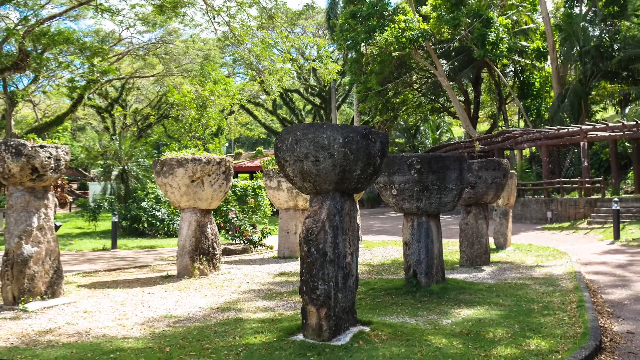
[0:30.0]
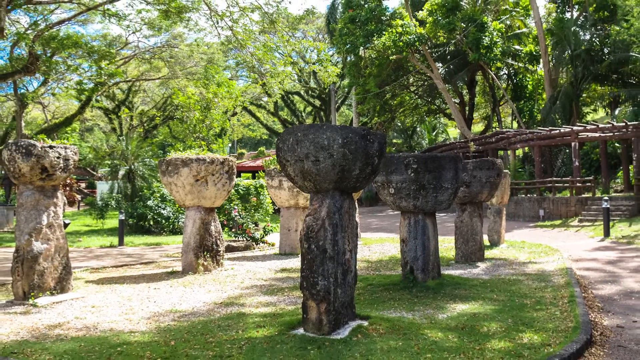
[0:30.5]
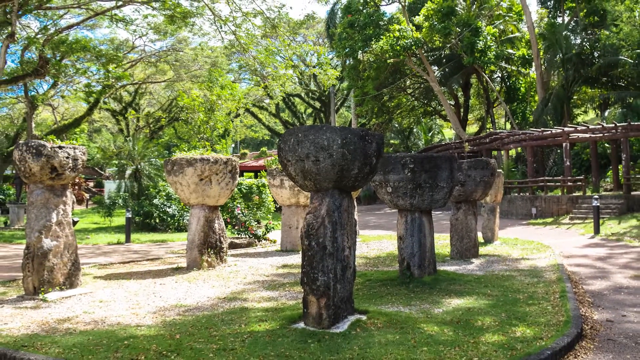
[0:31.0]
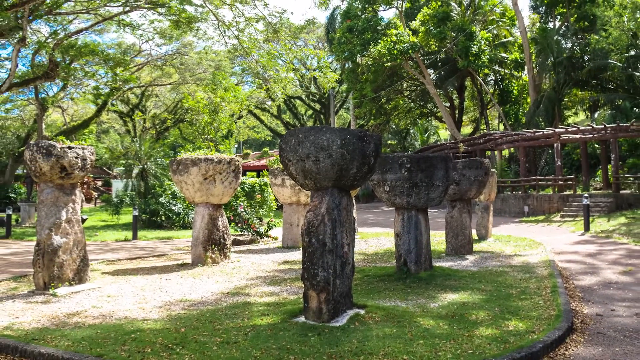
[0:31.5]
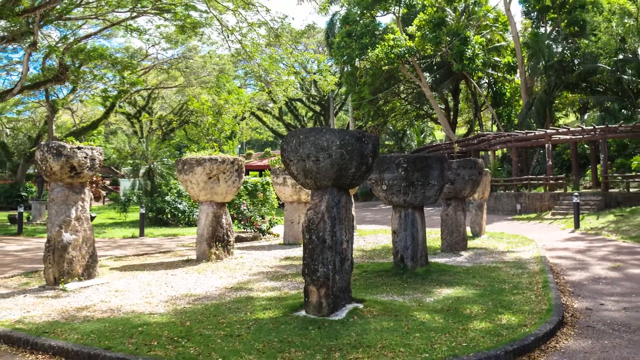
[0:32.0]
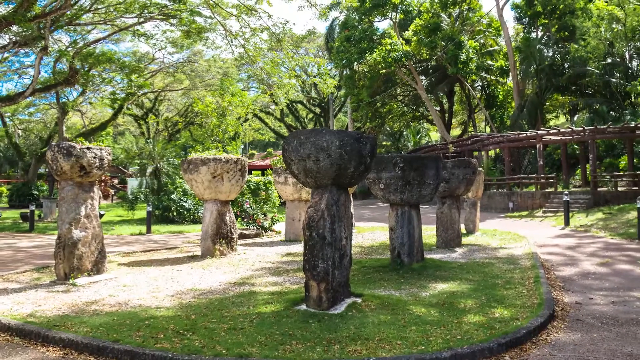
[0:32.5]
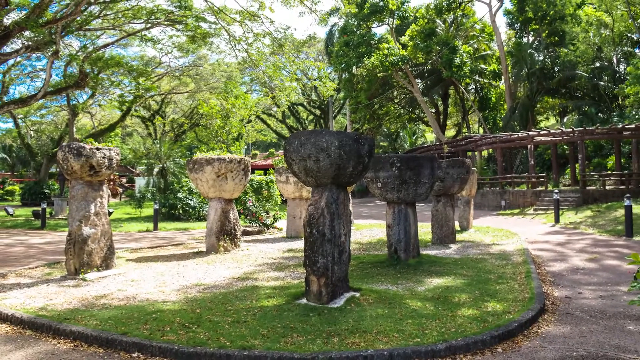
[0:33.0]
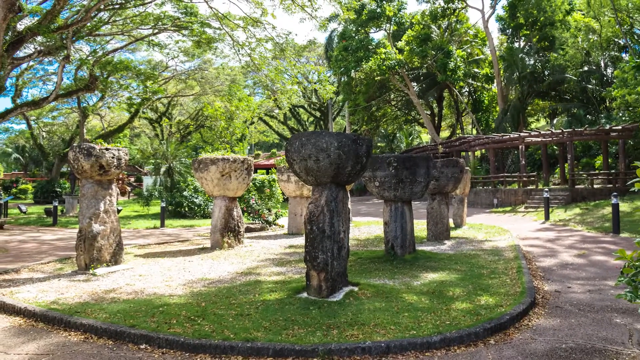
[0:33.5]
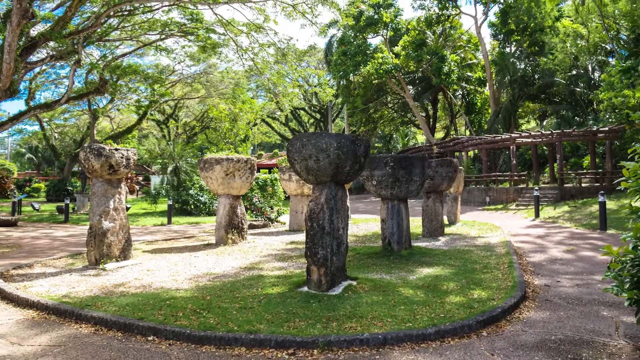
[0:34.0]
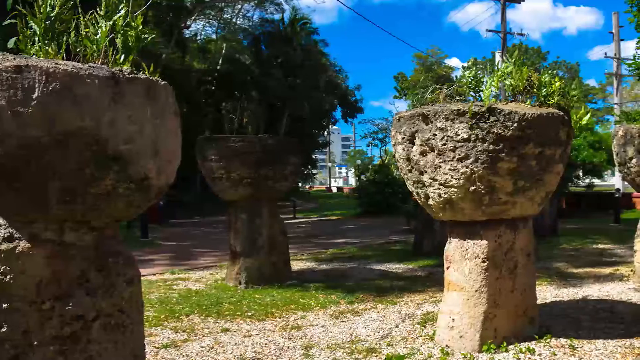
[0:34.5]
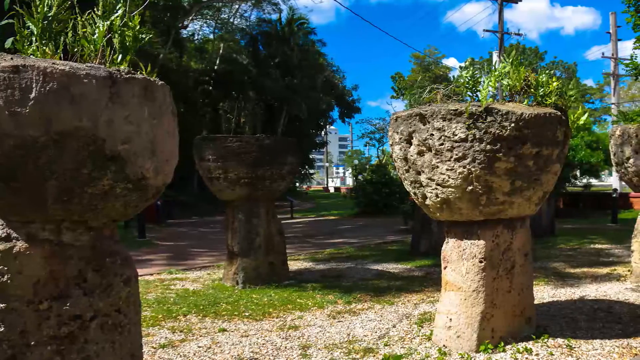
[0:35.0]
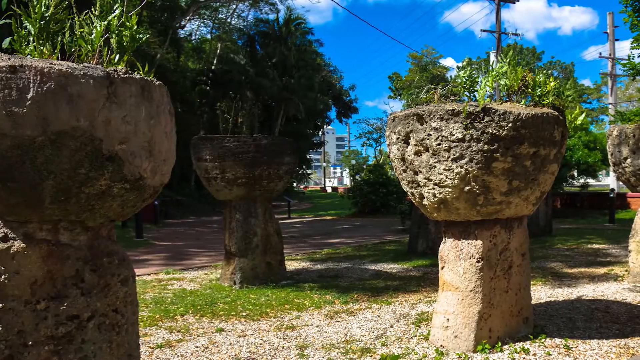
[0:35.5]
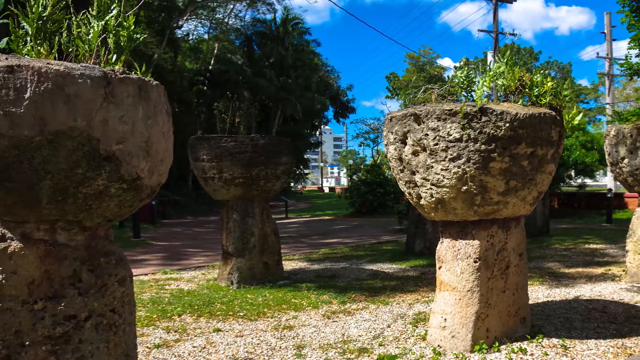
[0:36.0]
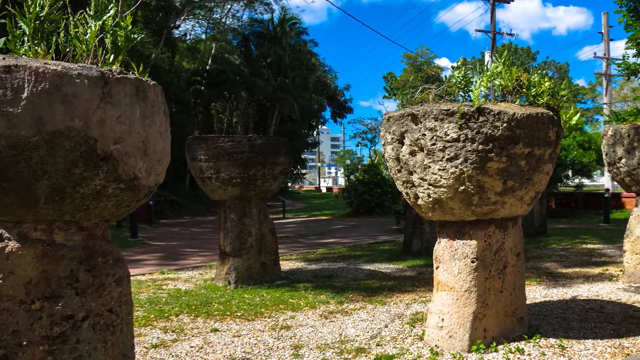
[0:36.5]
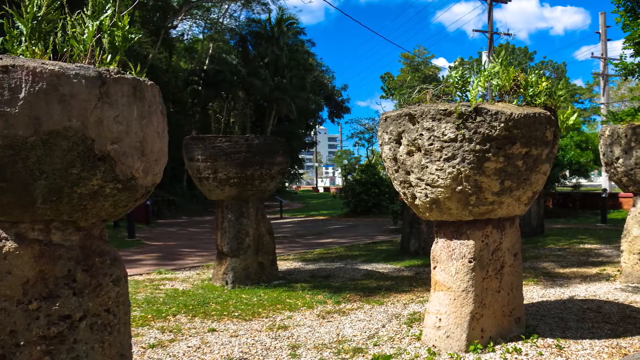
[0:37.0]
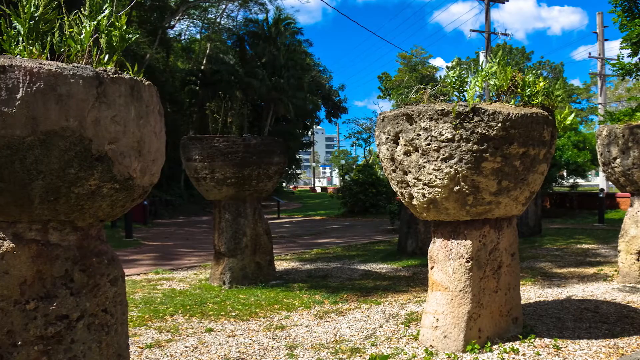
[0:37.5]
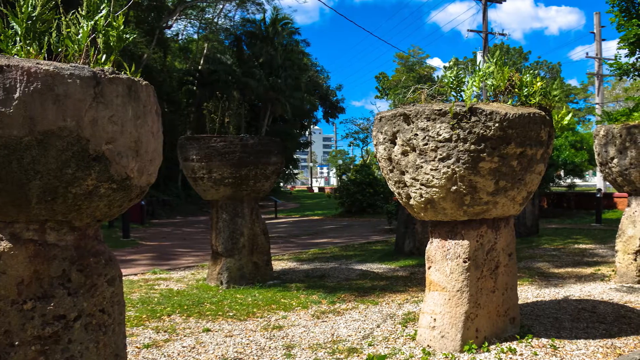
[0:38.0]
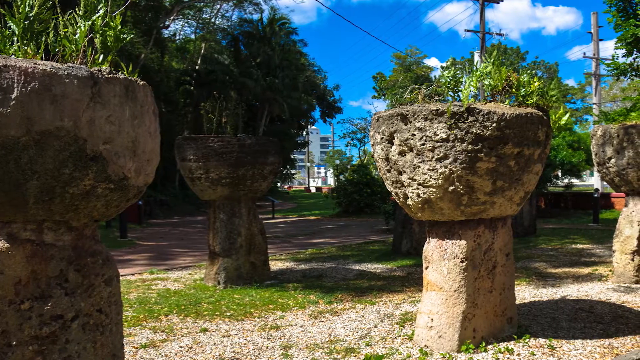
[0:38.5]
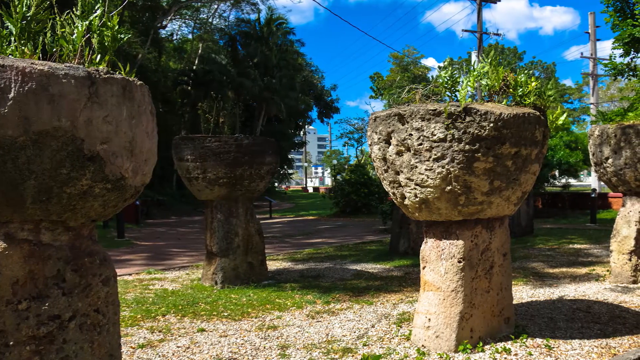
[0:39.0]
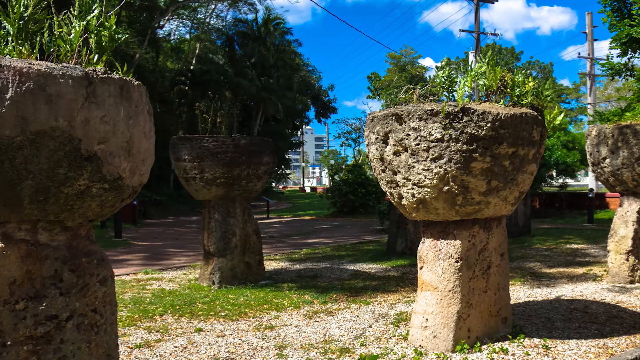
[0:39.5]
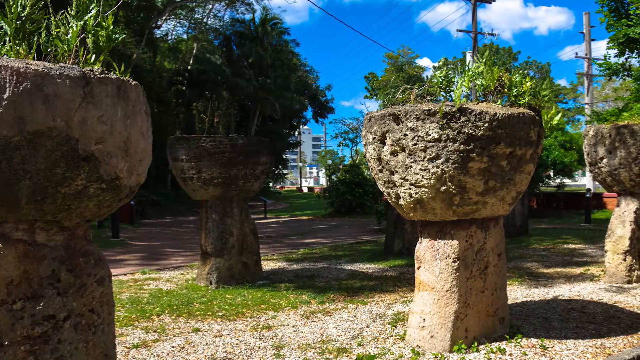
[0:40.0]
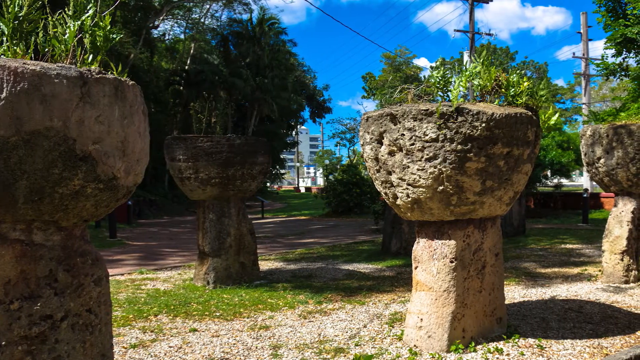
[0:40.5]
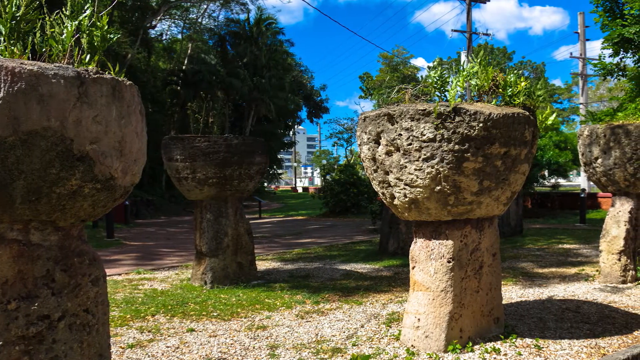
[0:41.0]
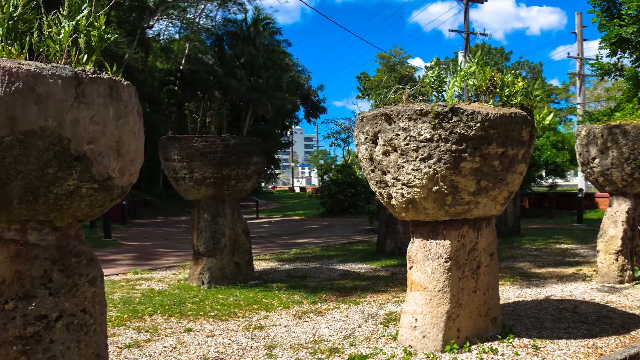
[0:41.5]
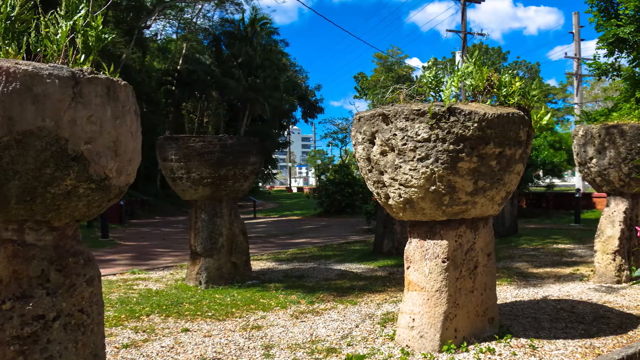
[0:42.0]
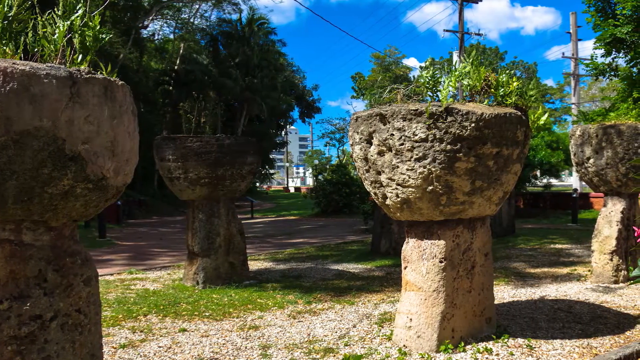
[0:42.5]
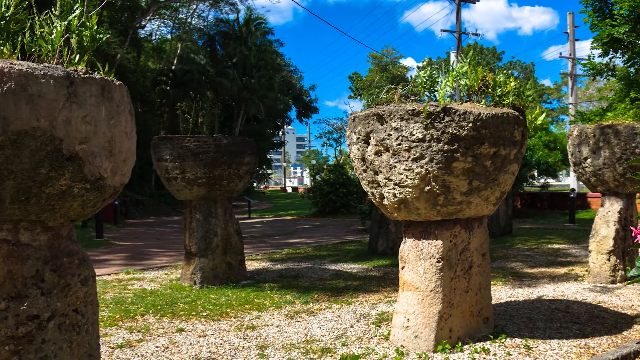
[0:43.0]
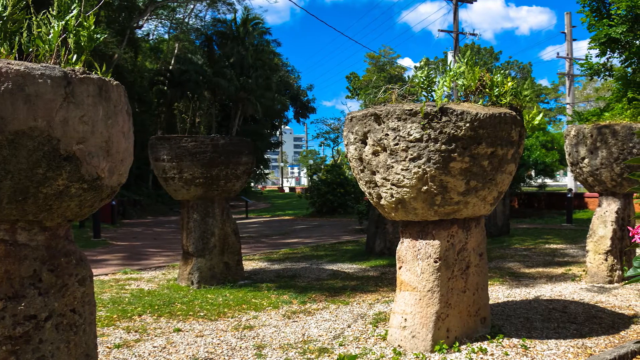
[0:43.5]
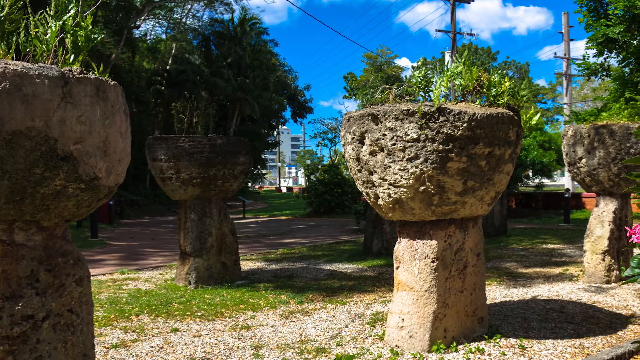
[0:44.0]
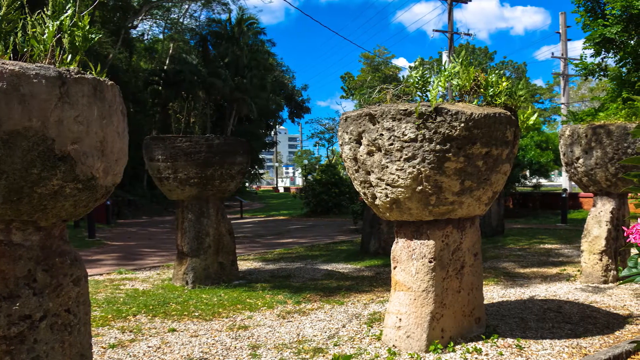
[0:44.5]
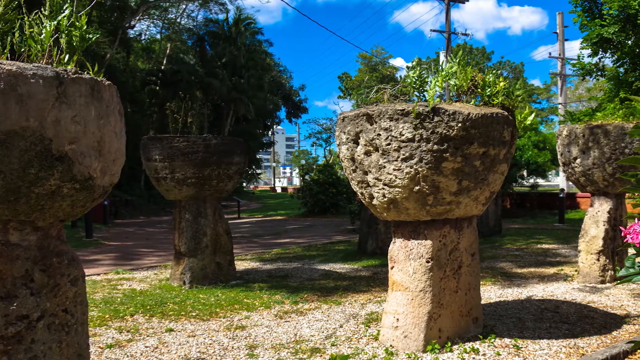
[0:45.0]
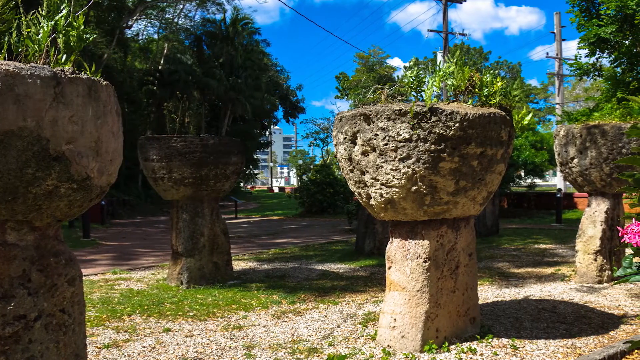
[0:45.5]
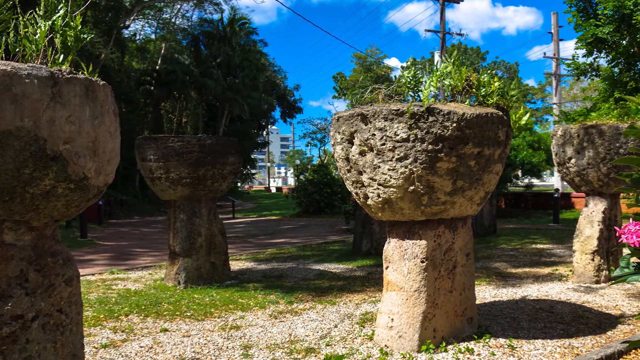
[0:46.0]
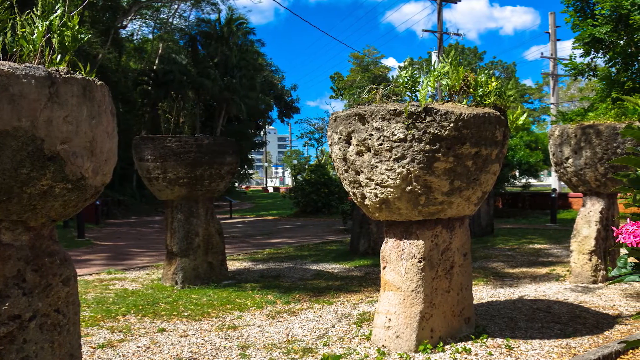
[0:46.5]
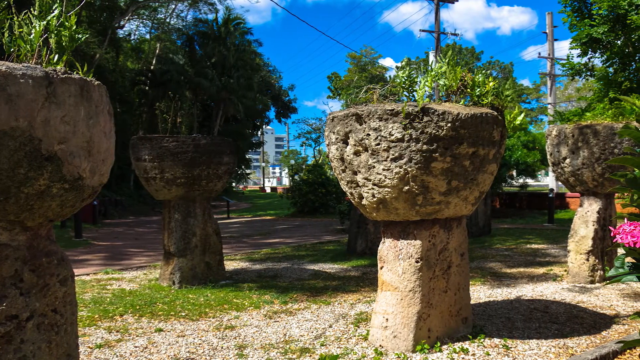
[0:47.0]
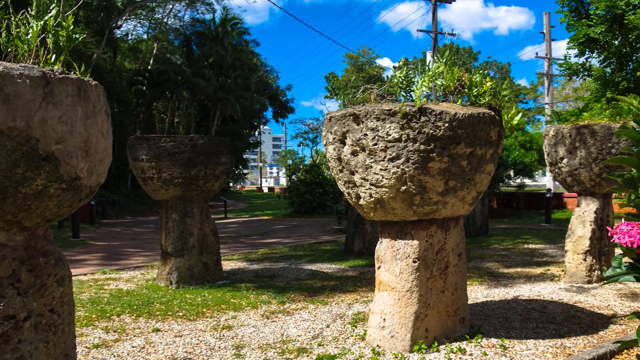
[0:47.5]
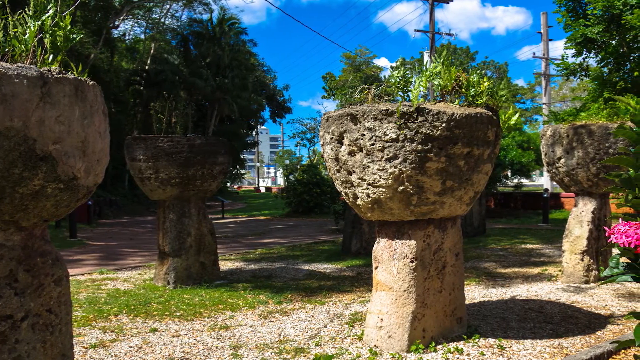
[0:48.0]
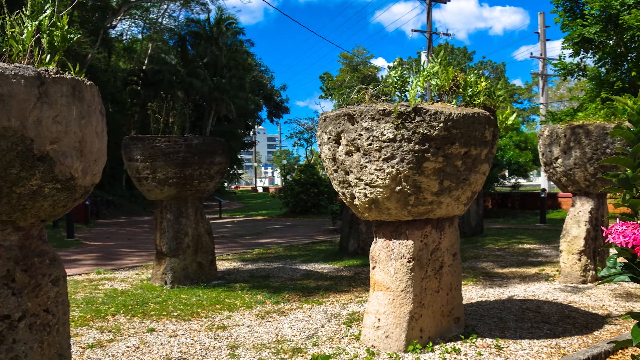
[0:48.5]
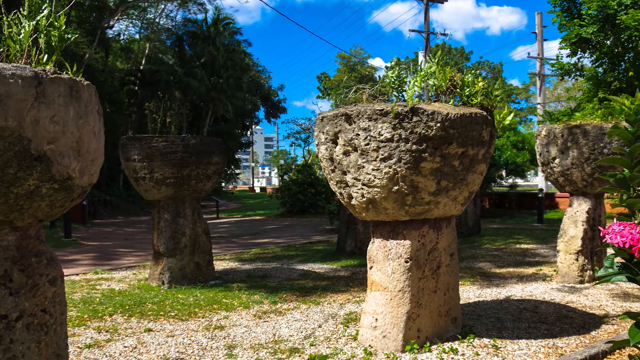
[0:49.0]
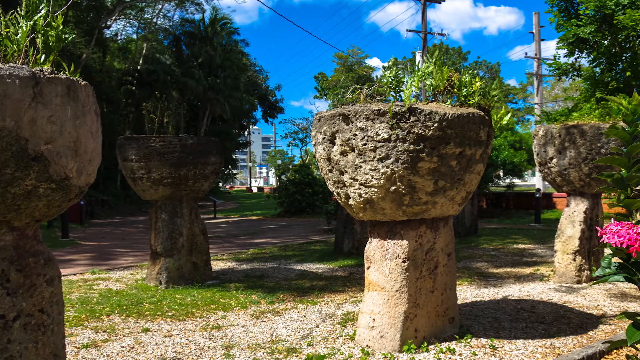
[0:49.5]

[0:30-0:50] The camera continues to move backwards, zooming away from six or seven large, rustic Japanese stone urns on either side of a pathway in an outdoor park. The shot then changes to another angle of the same stone urns, and the camera pans from left to right. The rough stone of the urns fills the foreground, with one very close to the camera at the far left of the screen and one slightly further away on the right. In the background is a pathway or paved area with tall green trees on either side, and a bright blue sky with a fluffy white cloud in the top right-hand corner. Telegraph poles and wires are visible, and urban buildings stand in the distant background. As the camera pans right, a bunch of bright pink flowers with green leaves appears at the very far right of the screen.